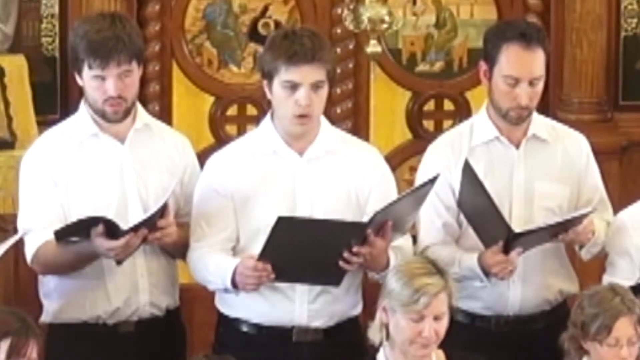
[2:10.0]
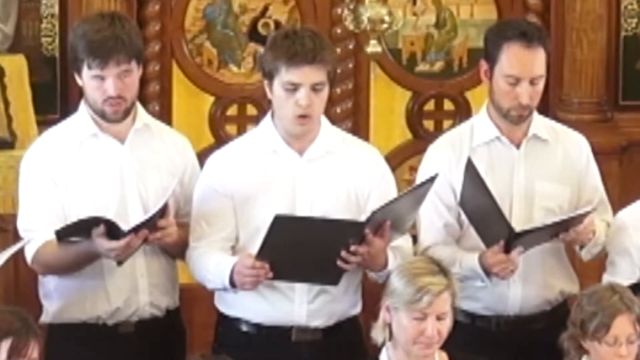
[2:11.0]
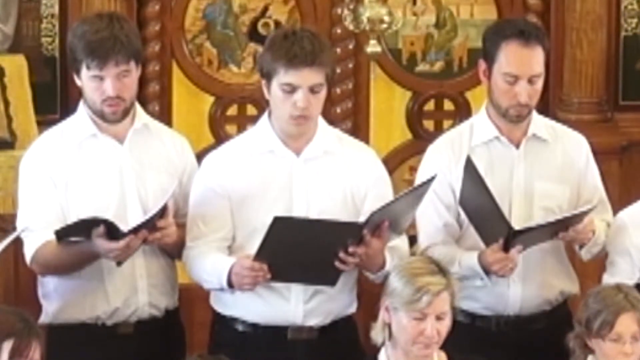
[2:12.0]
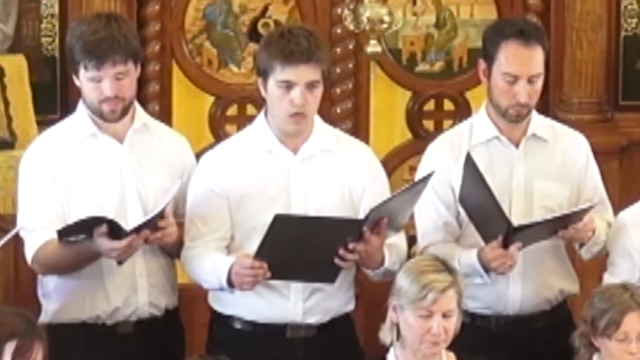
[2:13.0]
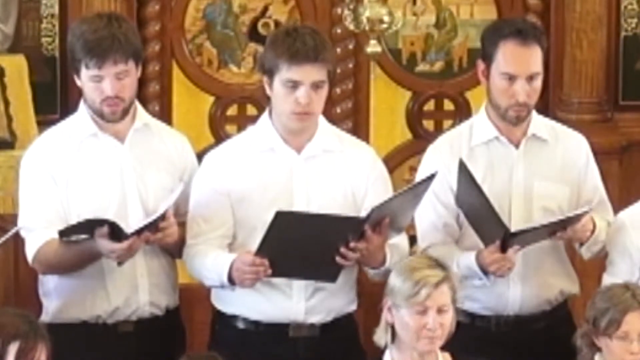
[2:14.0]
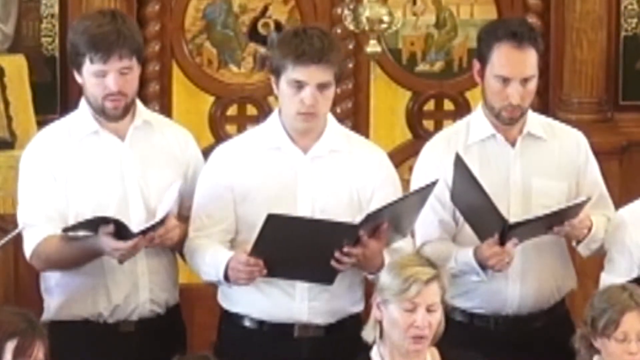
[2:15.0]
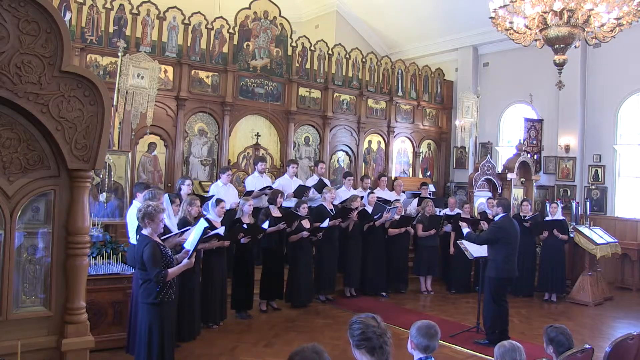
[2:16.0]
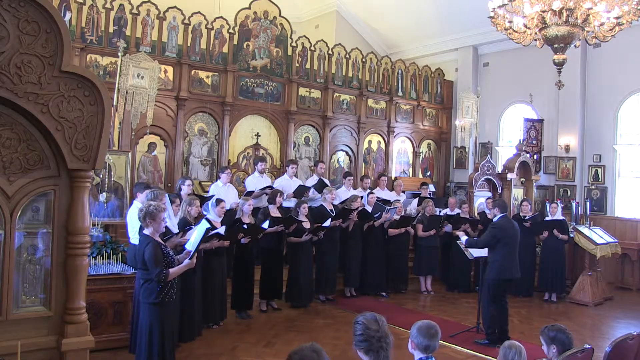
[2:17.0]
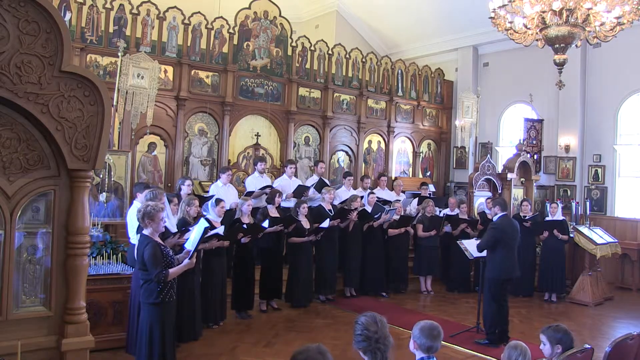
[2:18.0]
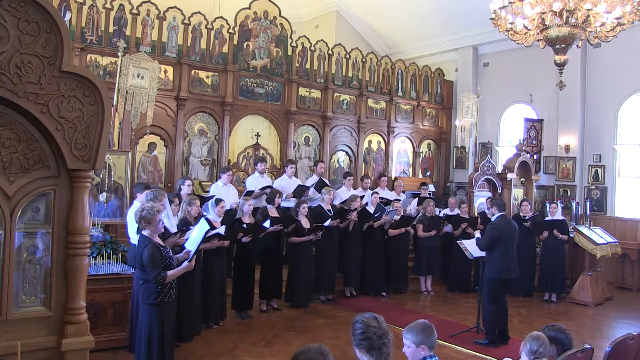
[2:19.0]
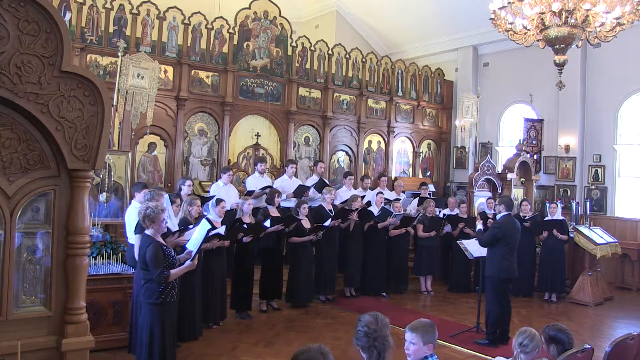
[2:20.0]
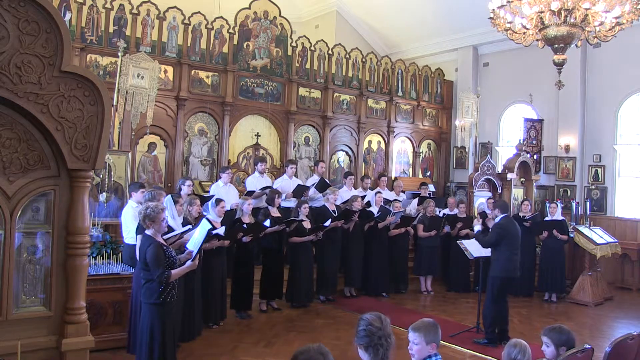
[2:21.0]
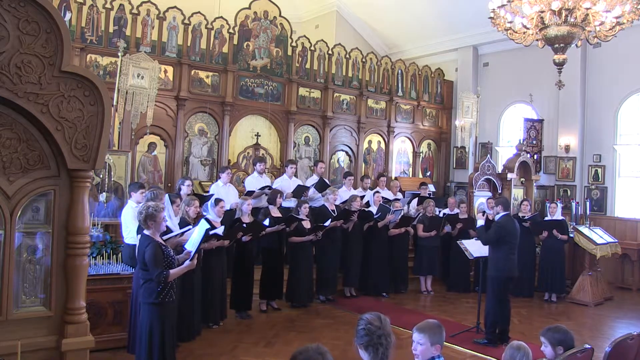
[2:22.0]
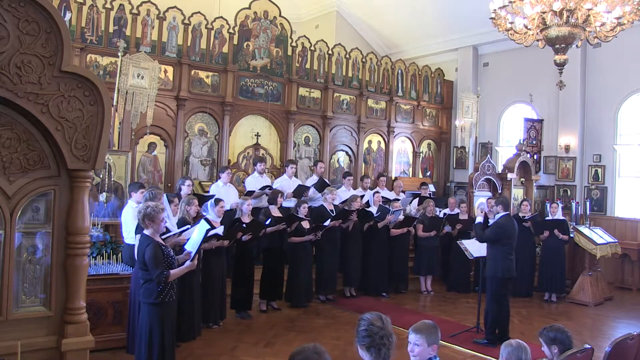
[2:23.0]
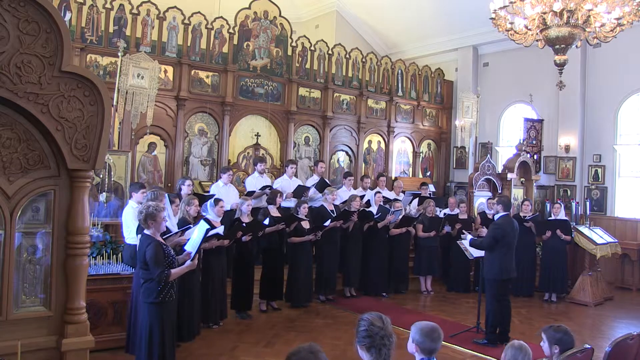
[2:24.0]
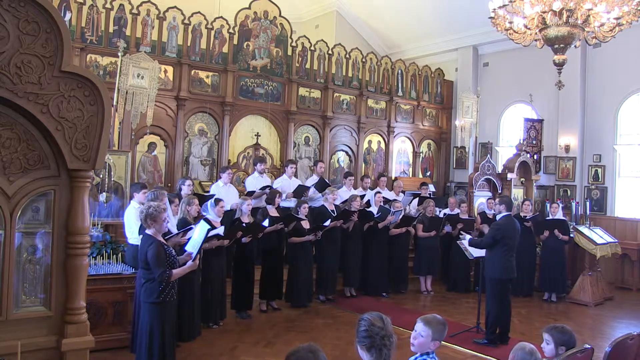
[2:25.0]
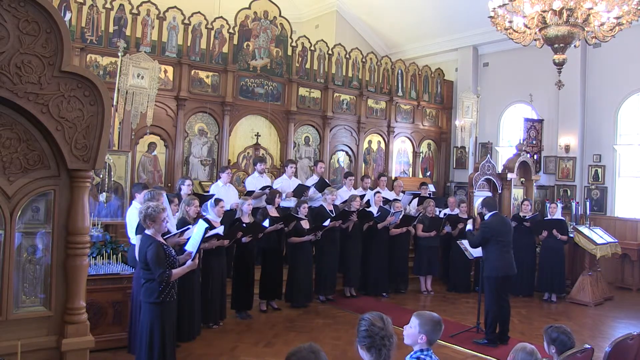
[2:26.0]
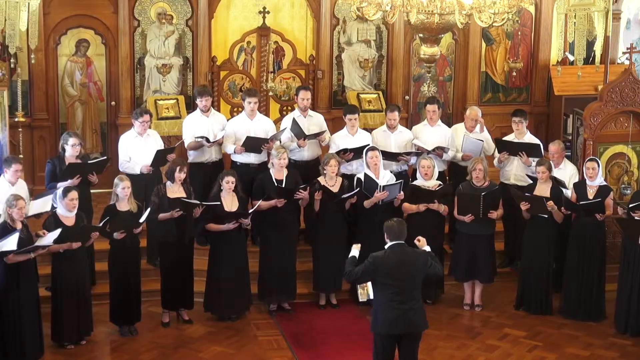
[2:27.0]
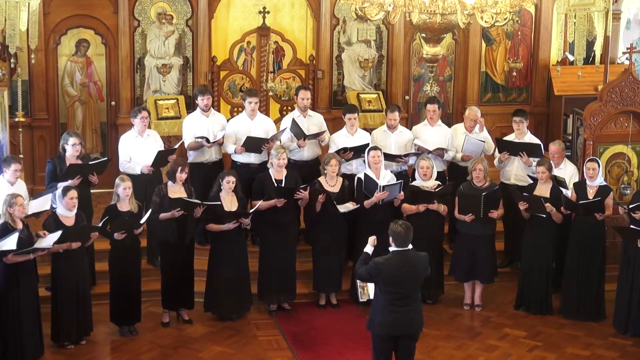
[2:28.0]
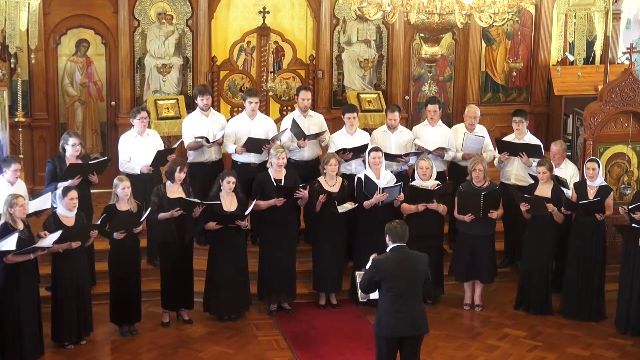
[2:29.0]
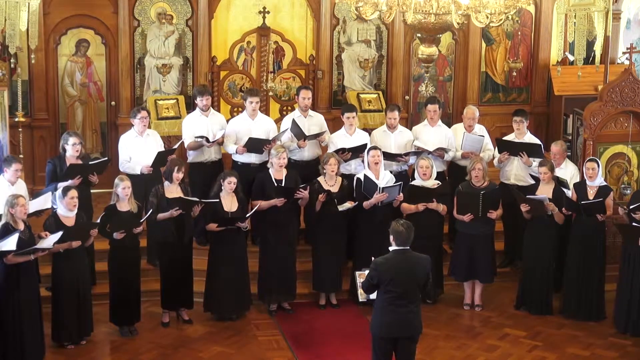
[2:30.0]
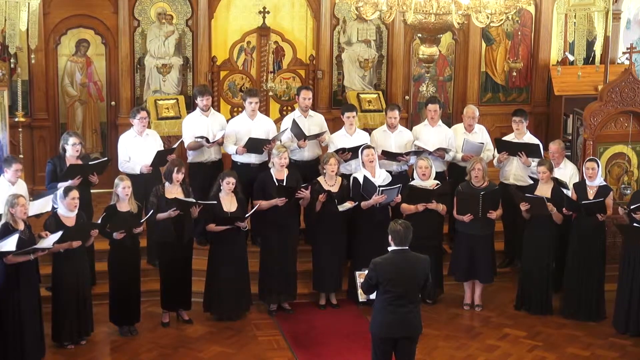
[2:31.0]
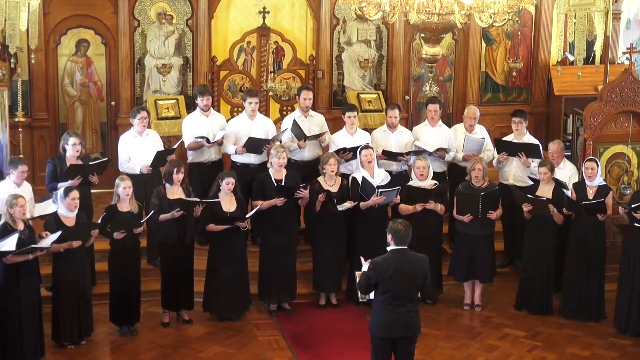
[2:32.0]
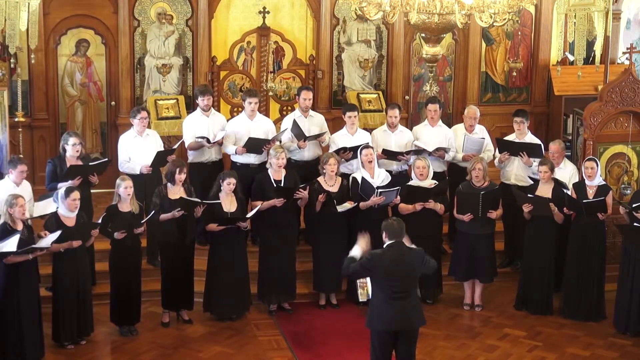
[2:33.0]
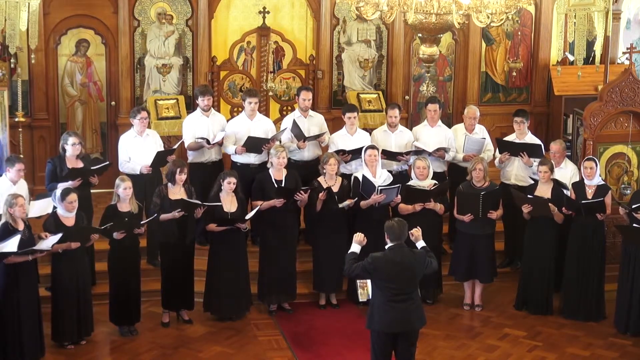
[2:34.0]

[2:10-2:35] The three men sing, looking down at their books or pamphlets. The scene switches to the zoomed-out view showing the whole choir as it continues to sing the song. The conductor, on the right side and dressed in a black suit, looks forward at the choir. The scene then changes to a closer, medium view that still shows most of the choir members. The women, dressed in all black, are in the front row, and the men, in the back row, wear white long-sleeve shirts. Behind them are murals of various religious leaders, crosses, and a lot of wooden golden colors. The conductor waves his hands to control the flow of the music as the choir continues to perform. The hanging chandelier appears to be golden and is slightly moving back and forth, left to right.